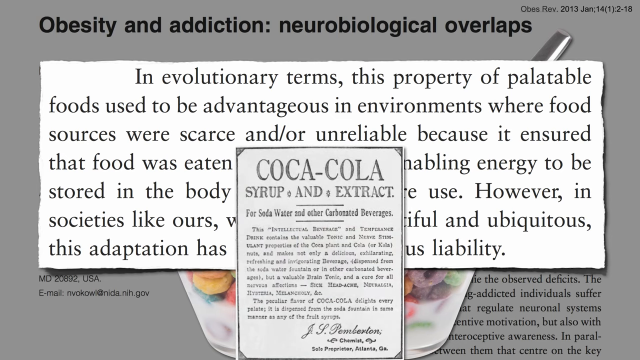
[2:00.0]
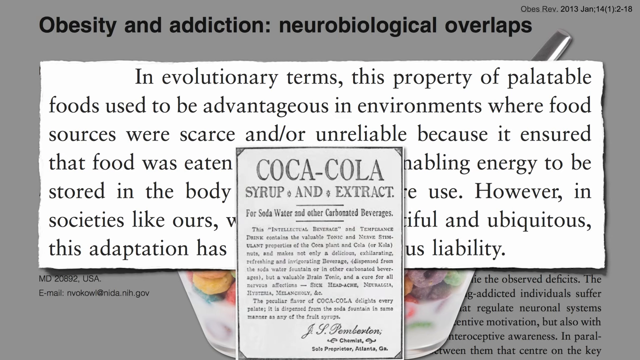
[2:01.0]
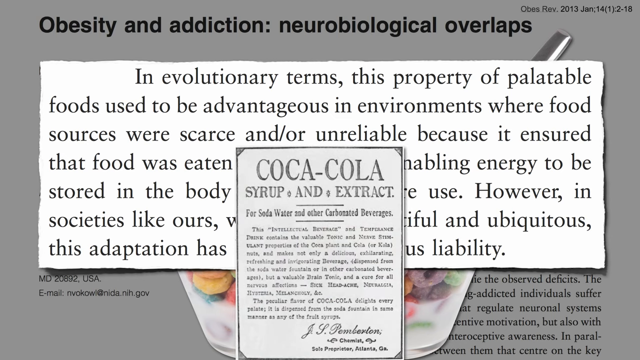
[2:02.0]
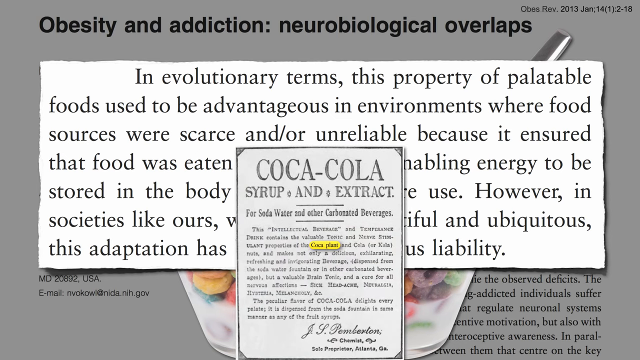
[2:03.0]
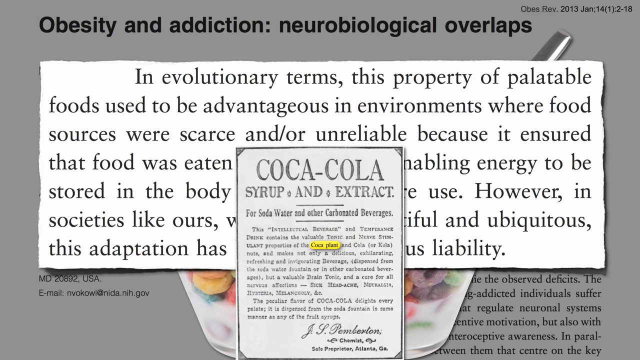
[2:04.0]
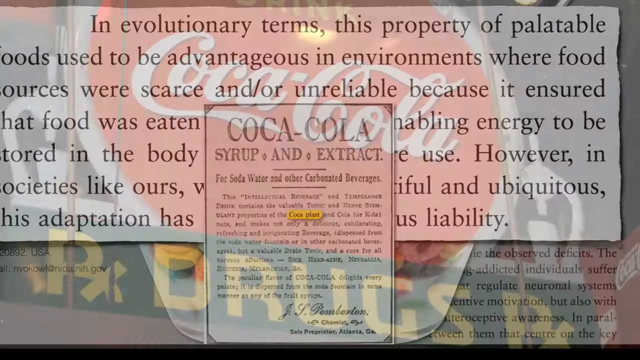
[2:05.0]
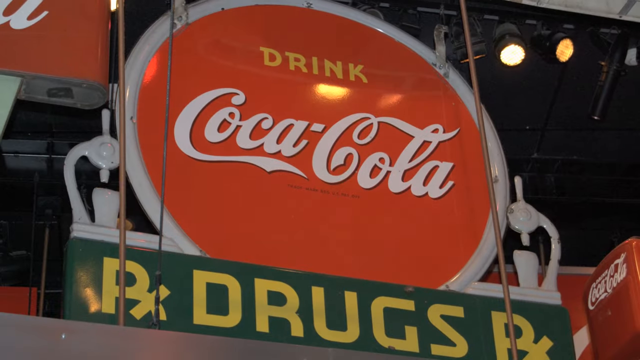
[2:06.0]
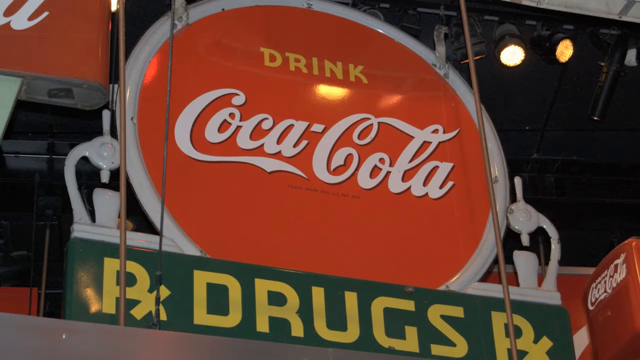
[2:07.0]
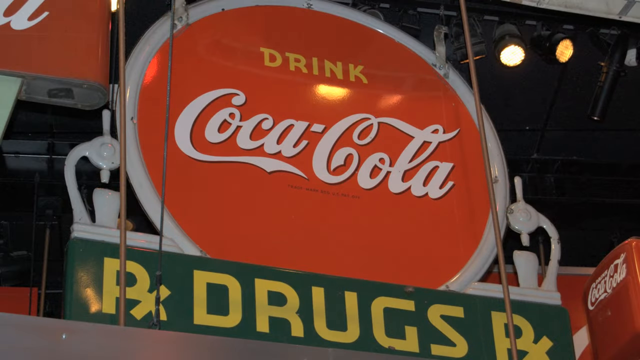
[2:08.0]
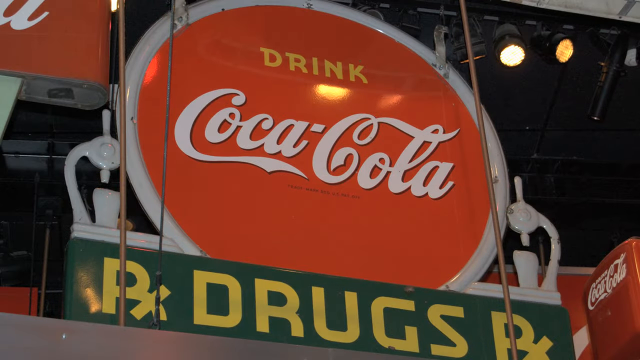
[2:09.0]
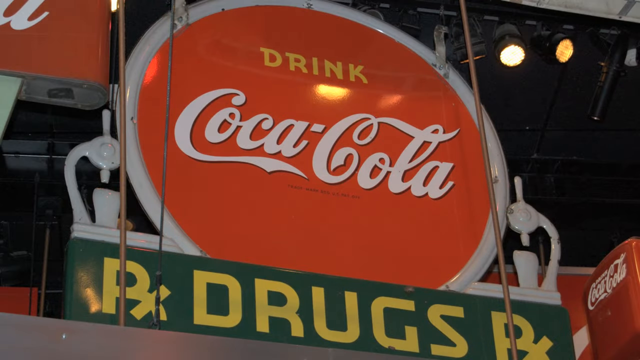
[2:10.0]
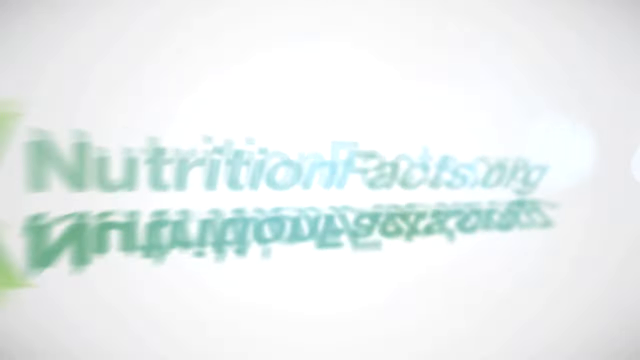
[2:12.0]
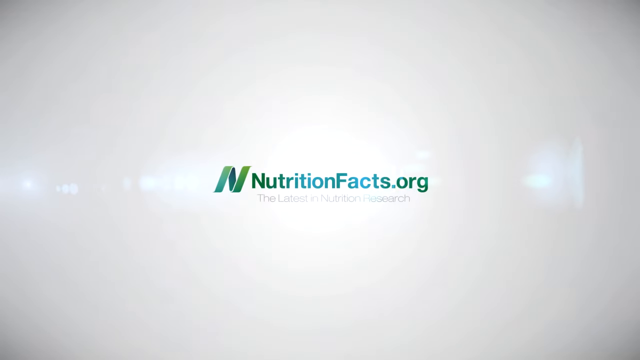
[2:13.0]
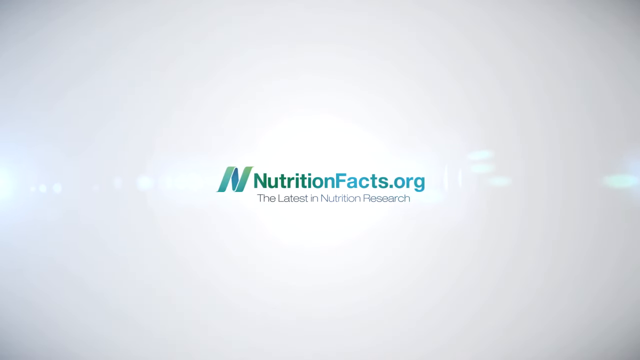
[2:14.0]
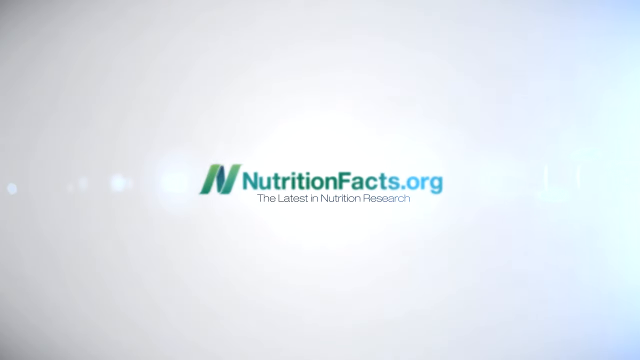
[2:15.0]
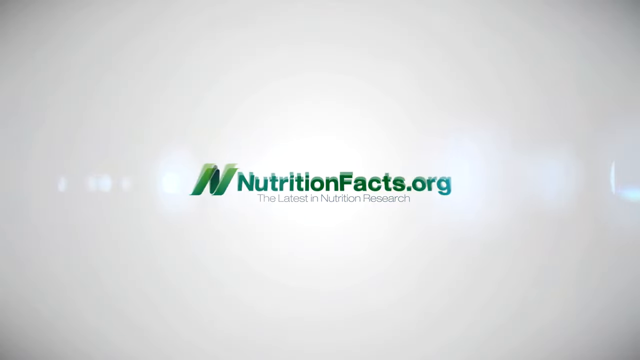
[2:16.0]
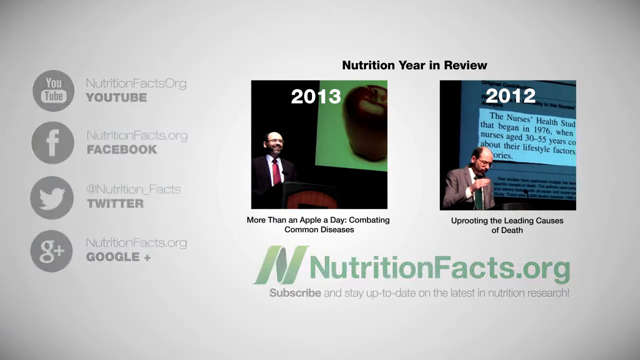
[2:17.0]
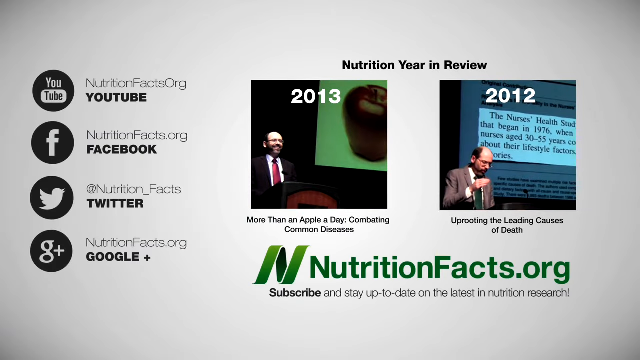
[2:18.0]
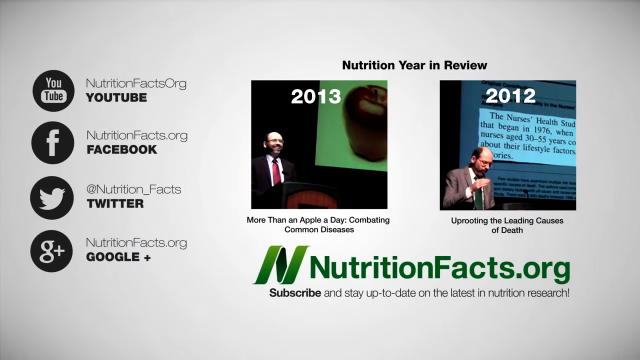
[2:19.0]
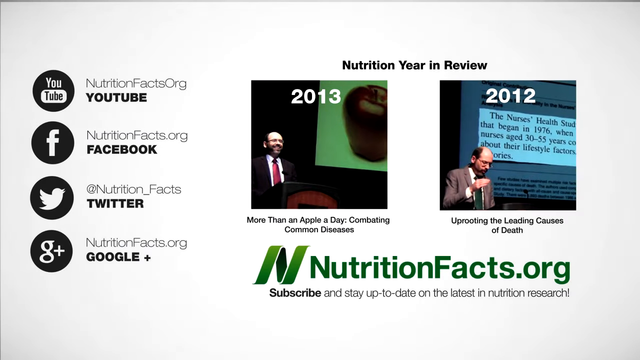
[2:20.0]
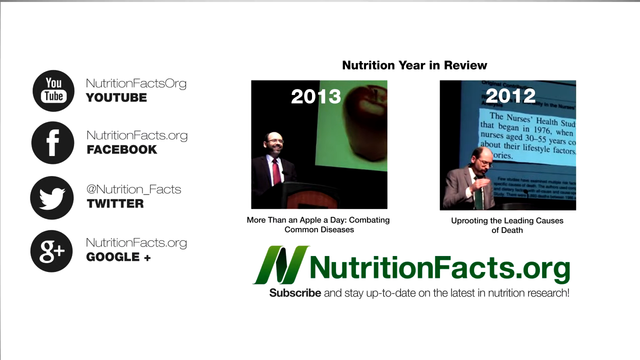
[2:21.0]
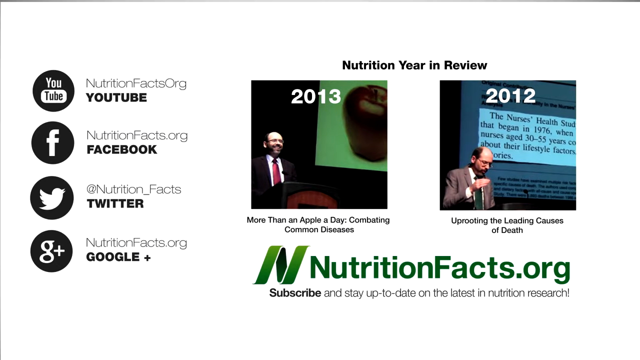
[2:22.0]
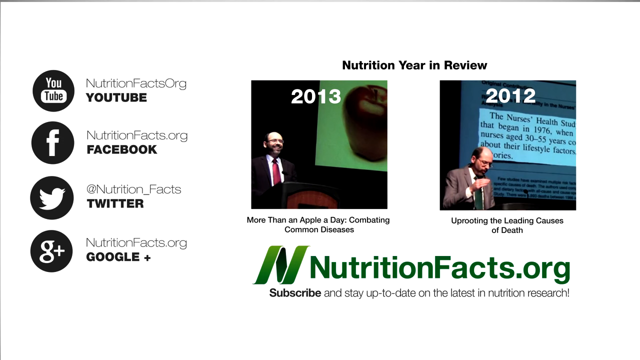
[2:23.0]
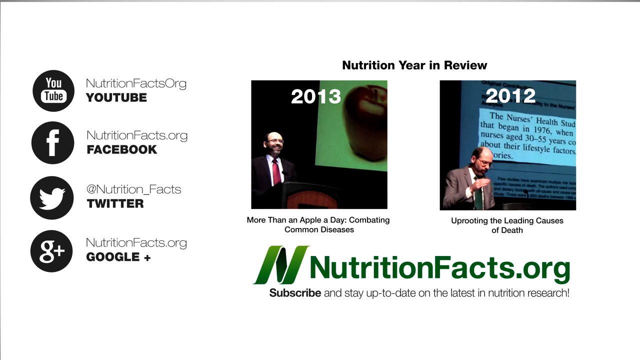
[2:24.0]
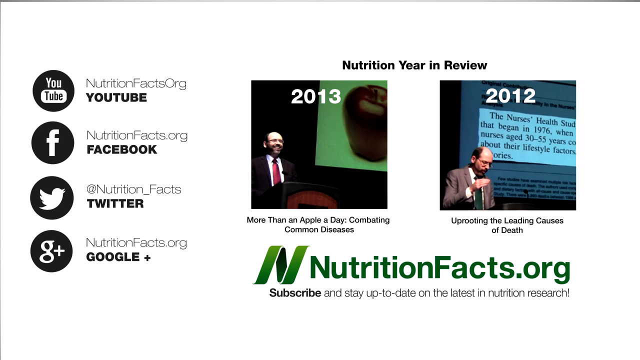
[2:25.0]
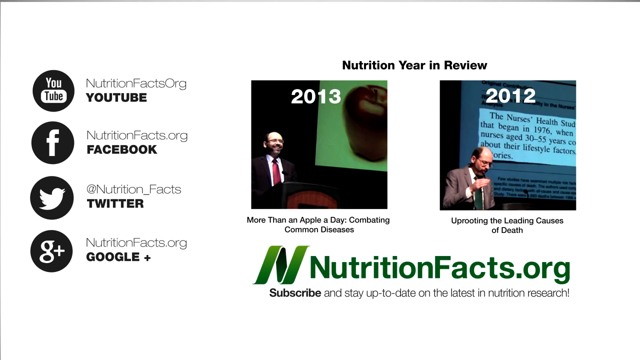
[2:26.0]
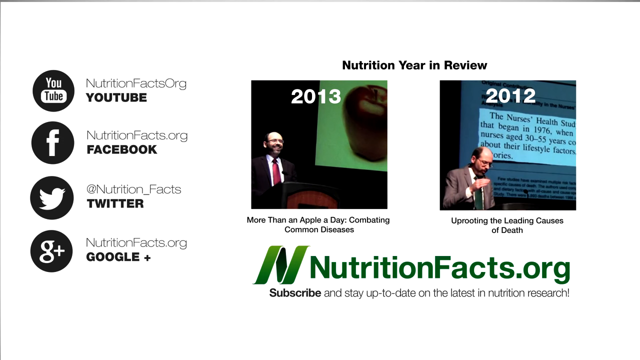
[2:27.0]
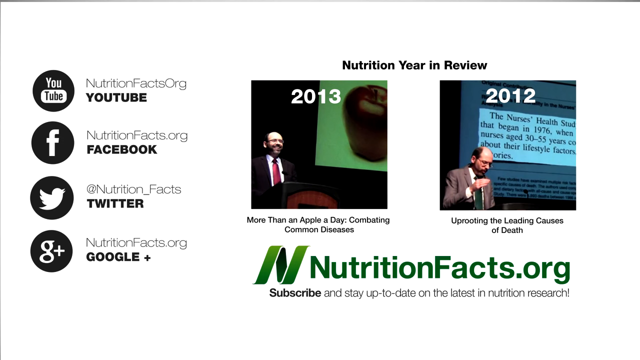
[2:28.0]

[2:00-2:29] The frame is a little wider than it is tall. An article titled "Obesity and Addiction Neurological Overlaps" is at the top. In the very center, a paragraph is blown up on a whitened background while the rest of the article behind it is grayed out. On top of that, a label has been placed in the bottom center of the paragraph, making over half of its lines unreadable; the overlaid block is titled "Coca-Cola Syrup and Extract". This fades out into a different scene showing the Coca-Cola logo at the top with the word "drink" printed in yellow above it, on a red background with a white circle around it. It appears to be a sign, maybe on top of a building, and it is kind of black around it. Finally comes a slide with a kind of light gray background and an N logo that is kind of like a ribbon, transitioning from teal to yellow-green to a darker shade of teal and back through that pattern again. It also says "nutritionfacts.org".